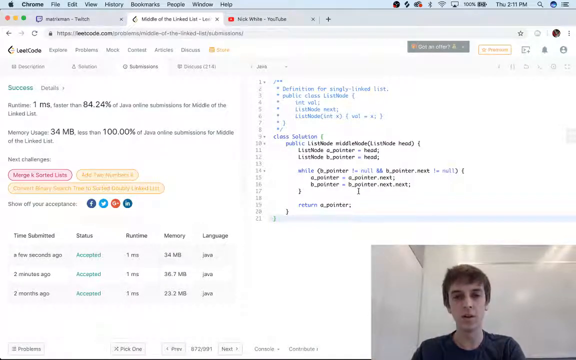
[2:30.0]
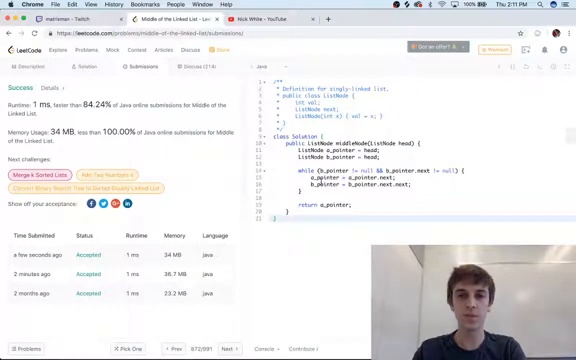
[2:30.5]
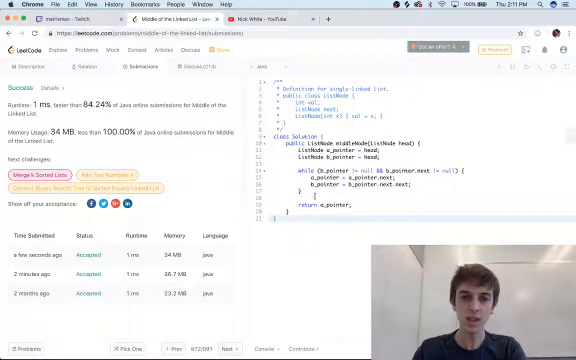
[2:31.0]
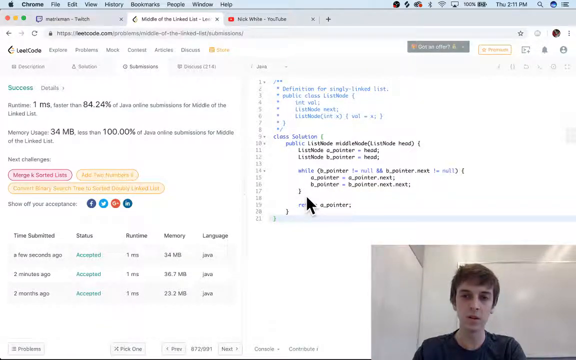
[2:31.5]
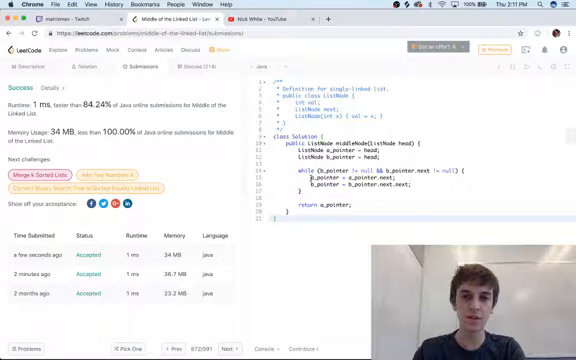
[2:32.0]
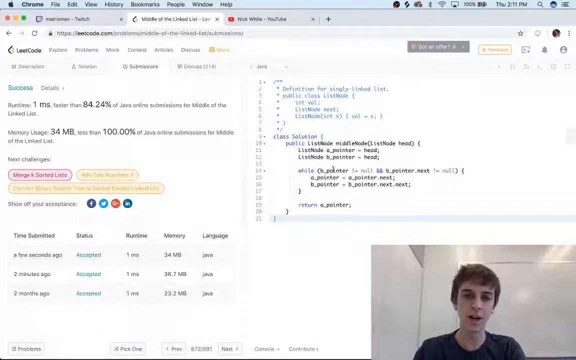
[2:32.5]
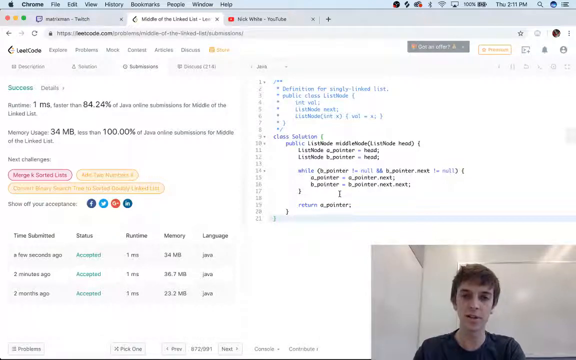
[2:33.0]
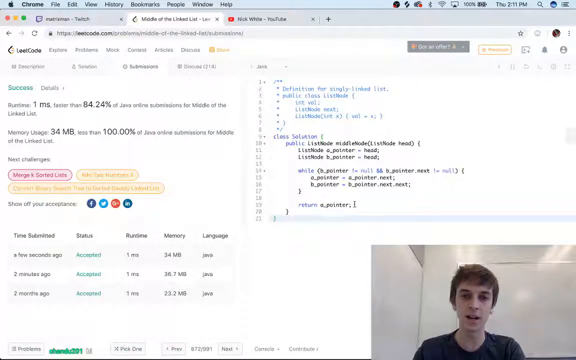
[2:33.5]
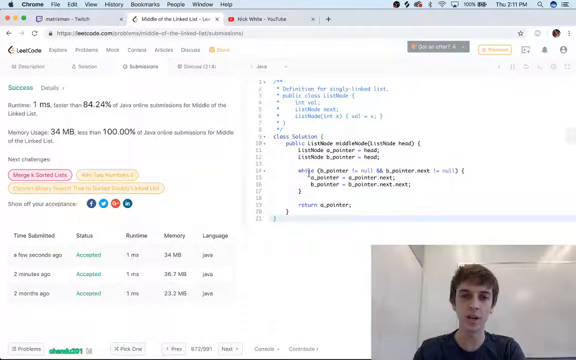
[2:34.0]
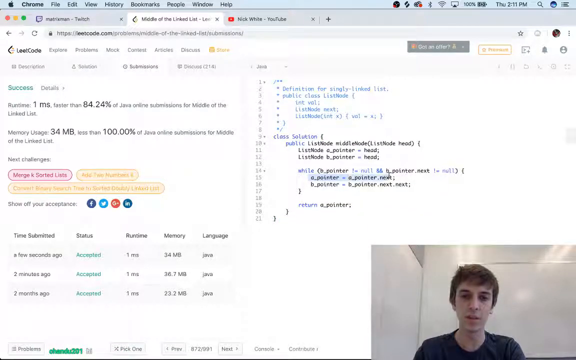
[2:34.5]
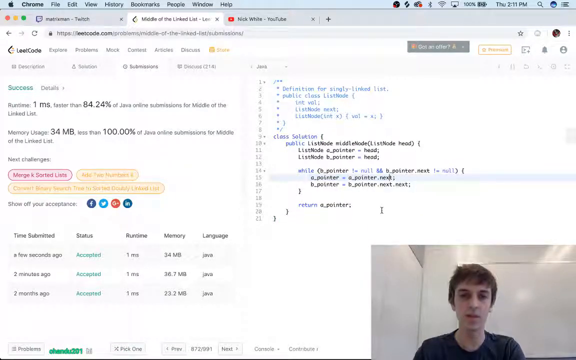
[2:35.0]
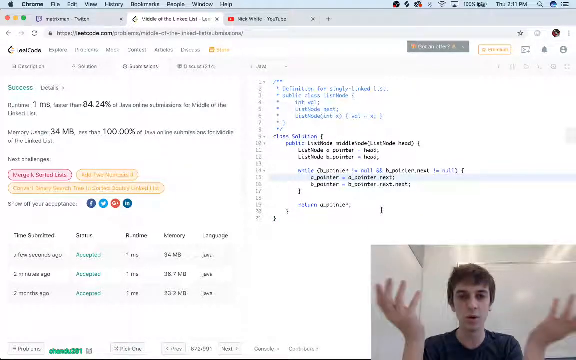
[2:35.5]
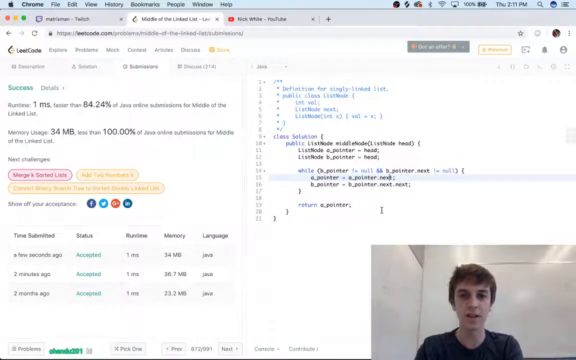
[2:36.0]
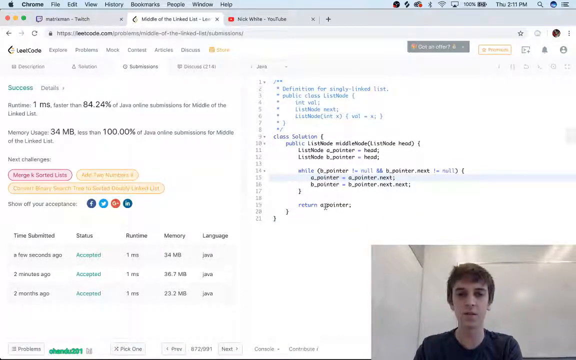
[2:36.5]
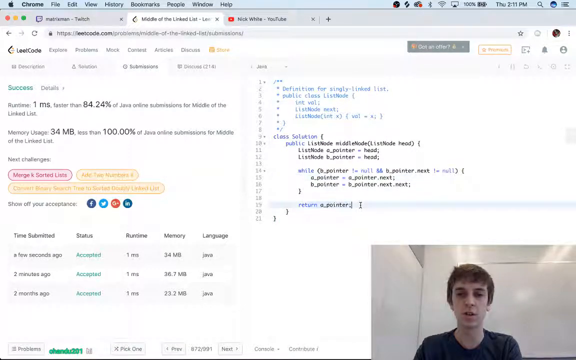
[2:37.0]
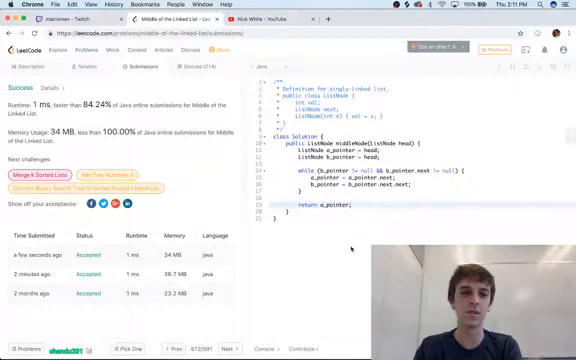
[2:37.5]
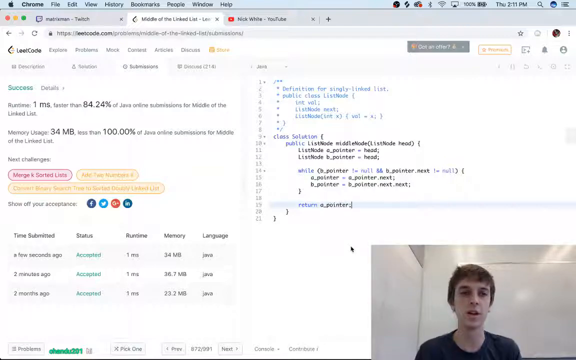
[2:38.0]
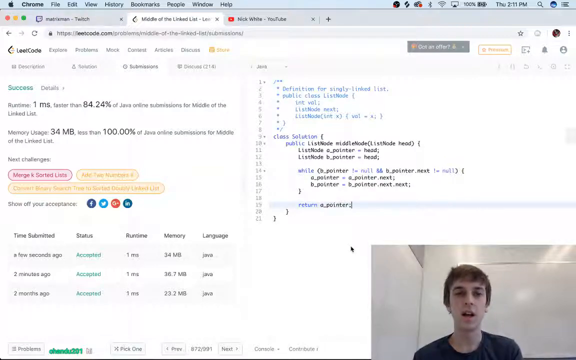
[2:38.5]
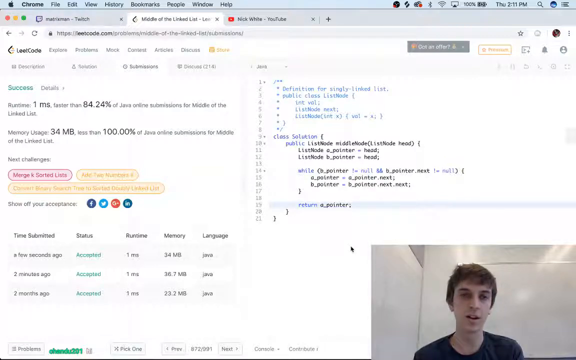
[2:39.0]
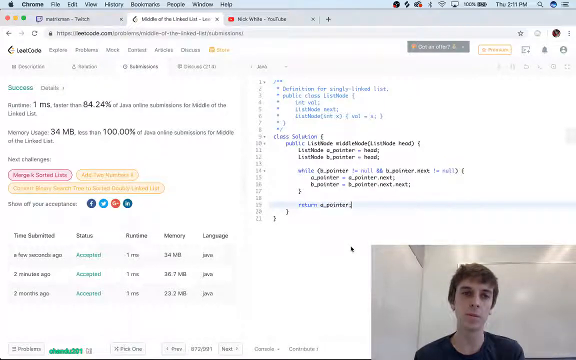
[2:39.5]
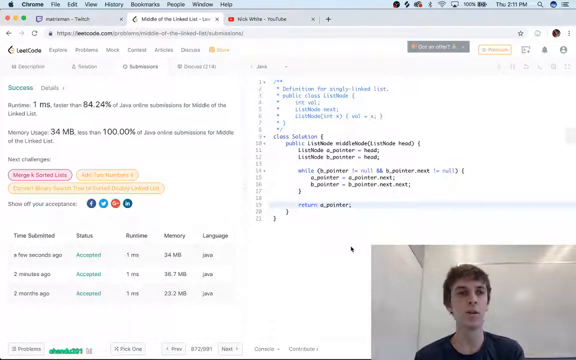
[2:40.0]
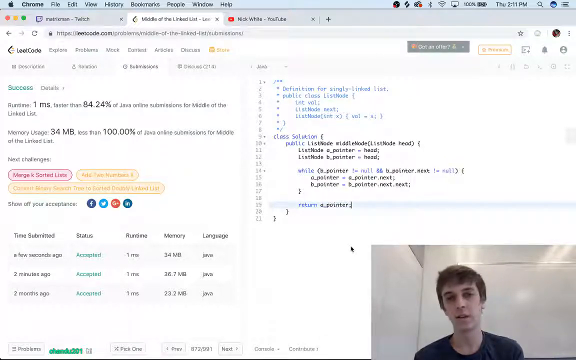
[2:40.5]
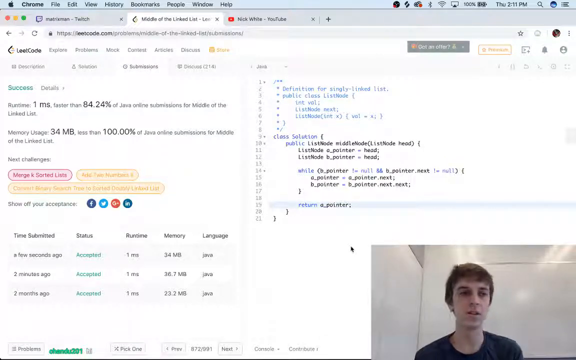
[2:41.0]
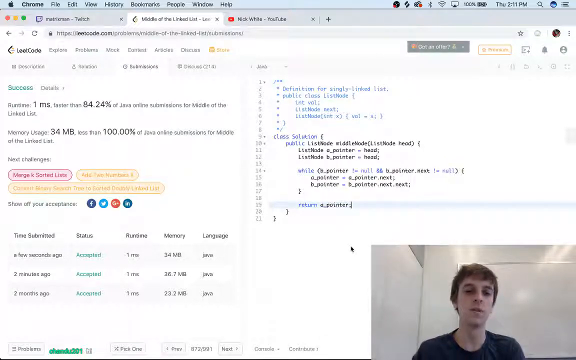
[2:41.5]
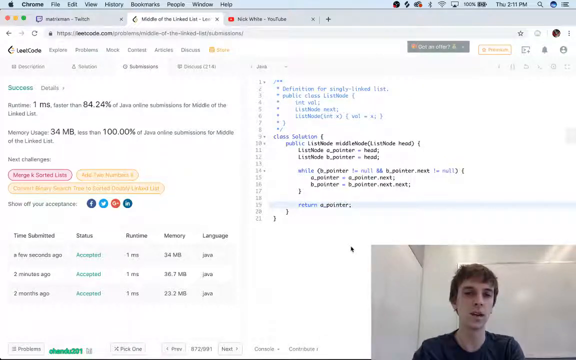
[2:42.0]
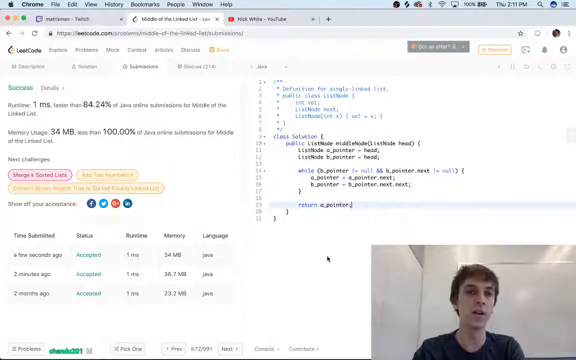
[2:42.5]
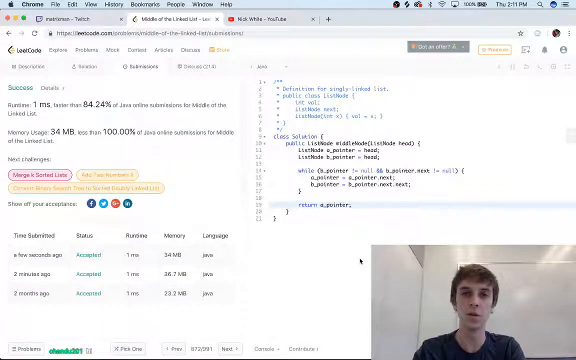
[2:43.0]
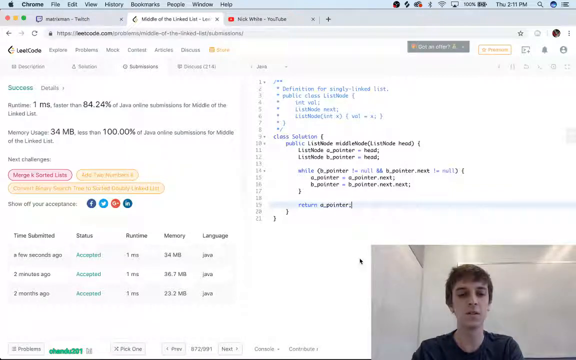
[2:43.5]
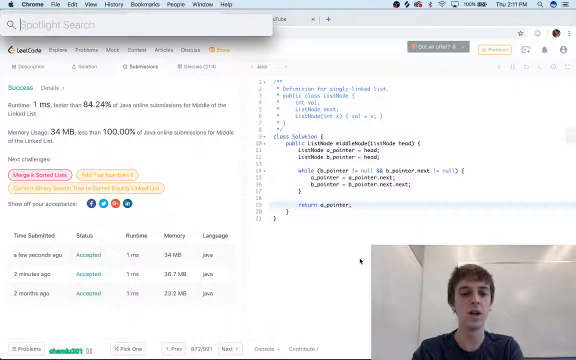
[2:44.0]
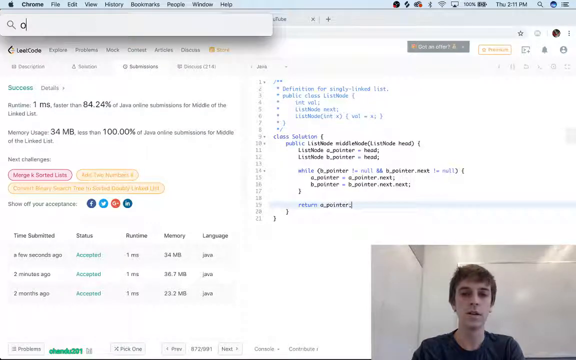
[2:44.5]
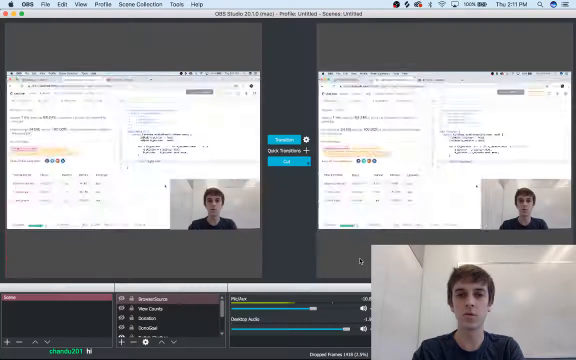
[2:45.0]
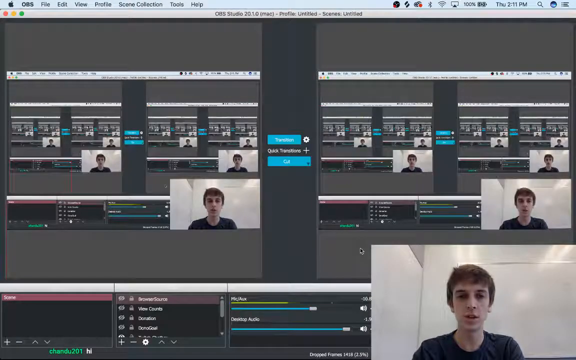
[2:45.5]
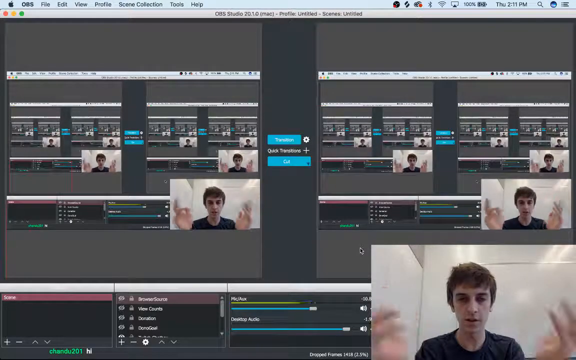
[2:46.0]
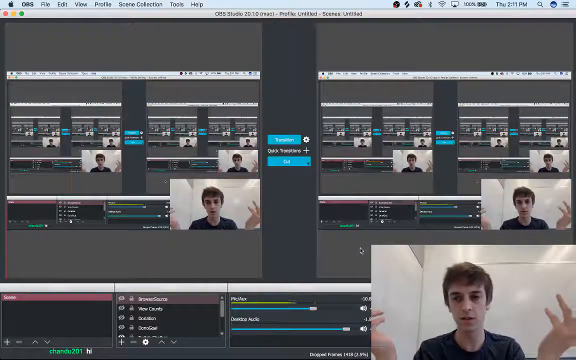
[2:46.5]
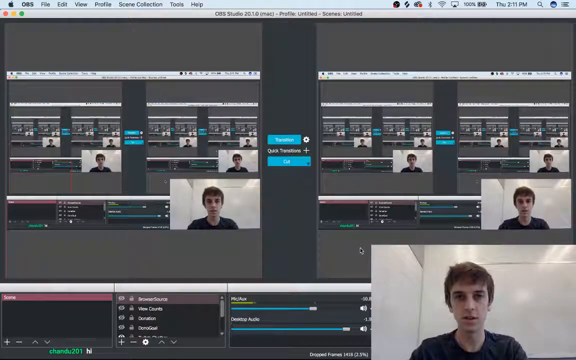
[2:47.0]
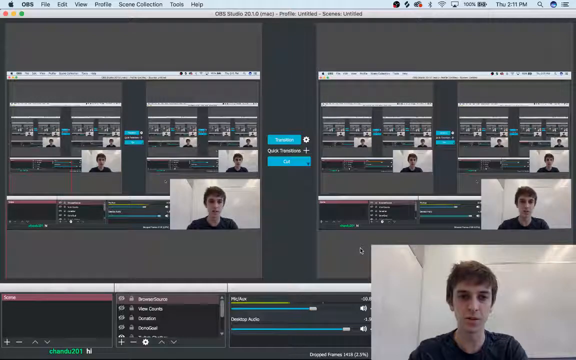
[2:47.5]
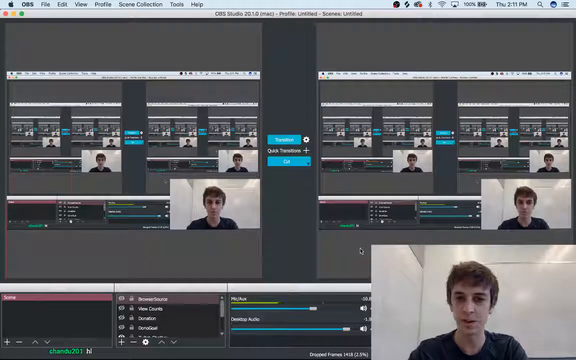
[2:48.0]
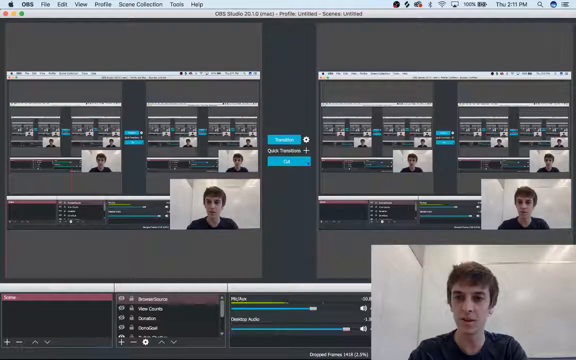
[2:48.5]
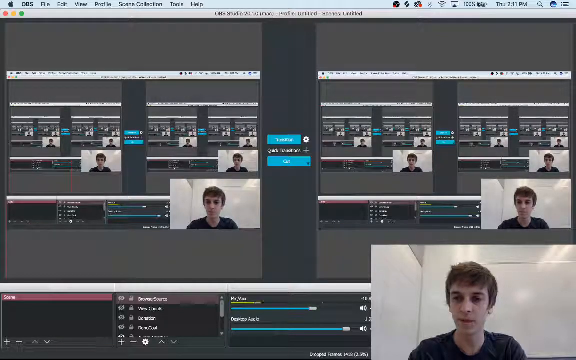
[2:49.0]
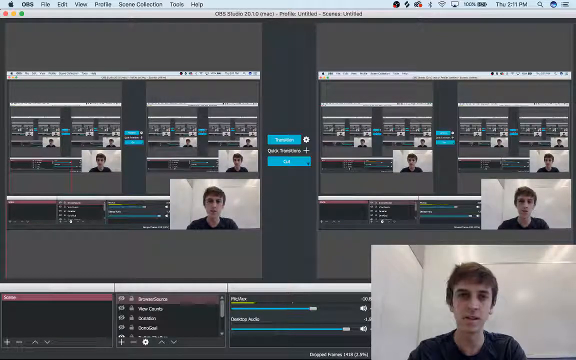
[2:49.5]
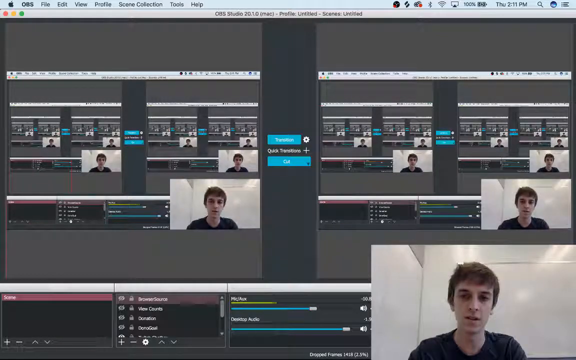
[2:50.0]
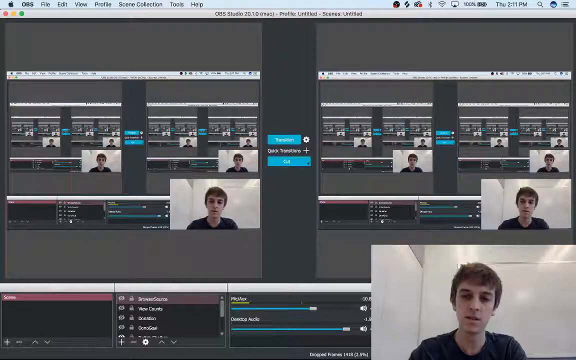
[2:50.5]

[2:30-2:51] The speaker switches back to demonstrating on his computer, circling the bottom section of the code he submitted, which is on the right side of the page above his camera input. He briefly highlights line 15, which reads "a_pointer - a_pointer.next", and throws up his hands in mock exasperation or mock confusion. He then highlights line 19, which reads "return a_pointer", which seems to show what he was miming confusion about. He then pulls up a search bar and types in "OBS", which switches to his recording software, showing many repeated recordings of himself: endless screens reflecting in each other as the screen records itself. The software is OBS, and it appears to be the Mac version, as he is using a Mac.